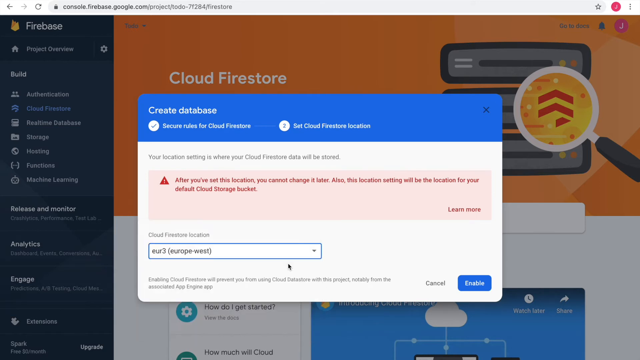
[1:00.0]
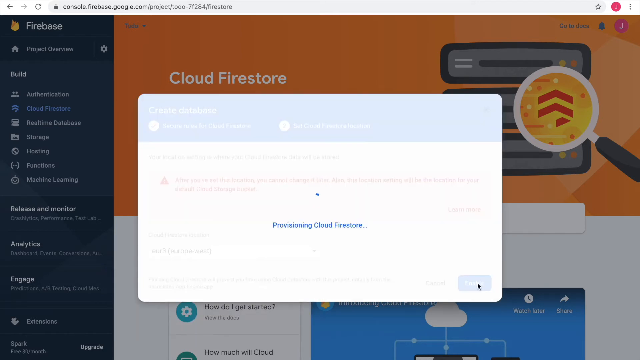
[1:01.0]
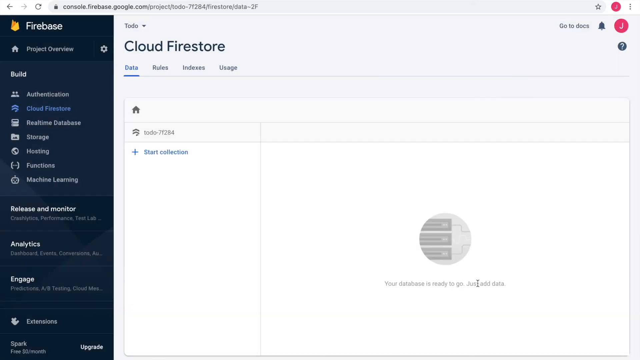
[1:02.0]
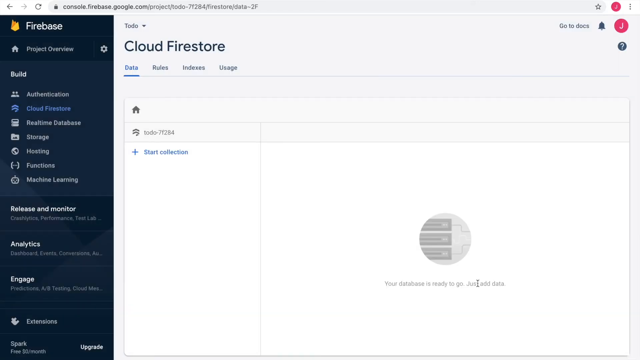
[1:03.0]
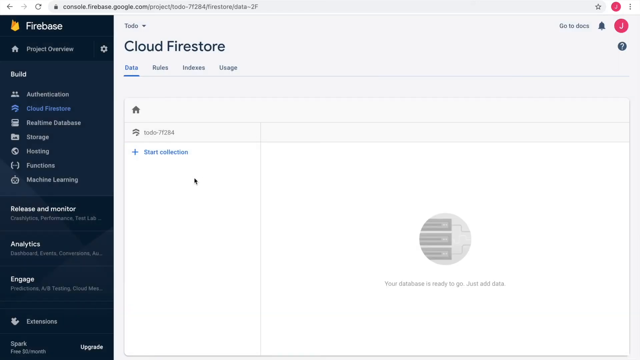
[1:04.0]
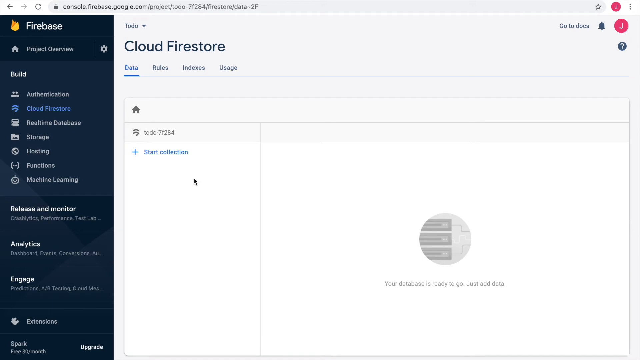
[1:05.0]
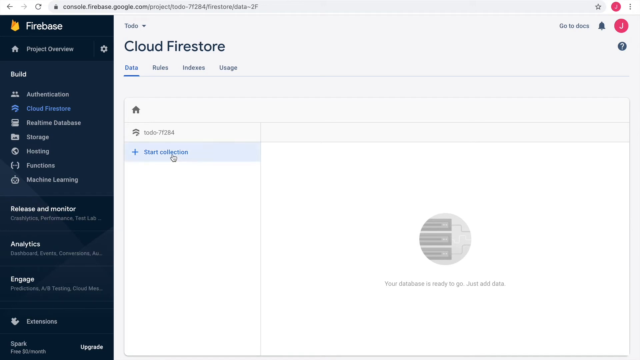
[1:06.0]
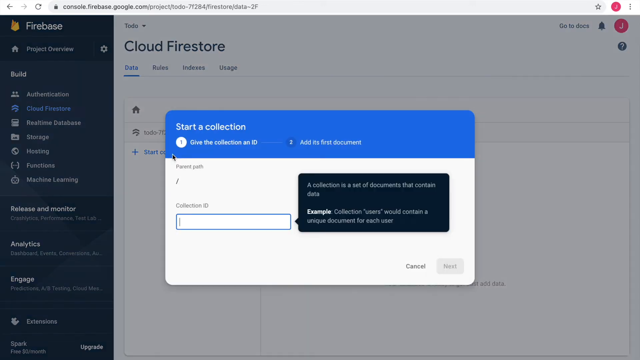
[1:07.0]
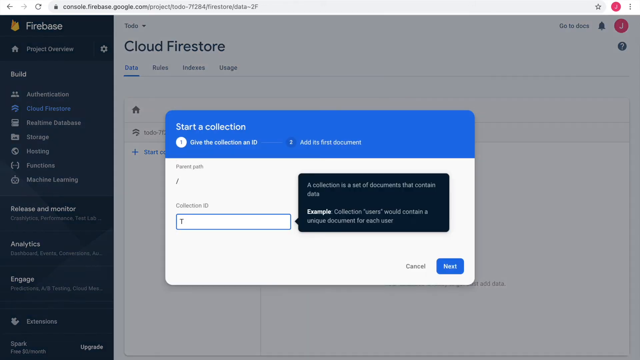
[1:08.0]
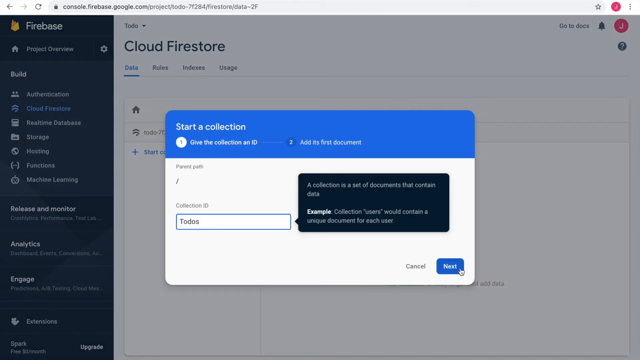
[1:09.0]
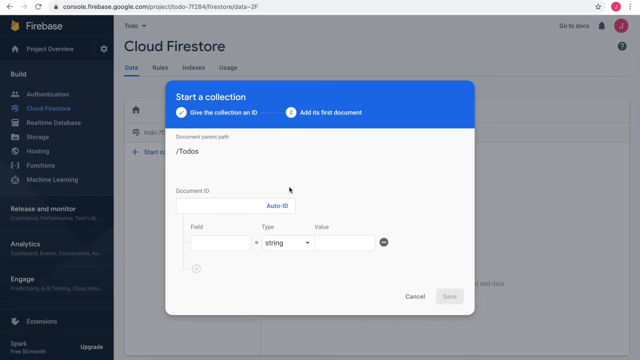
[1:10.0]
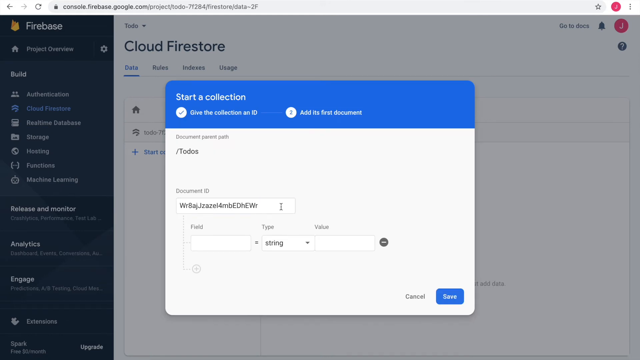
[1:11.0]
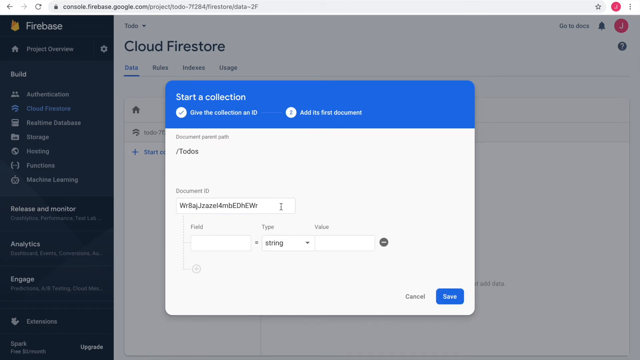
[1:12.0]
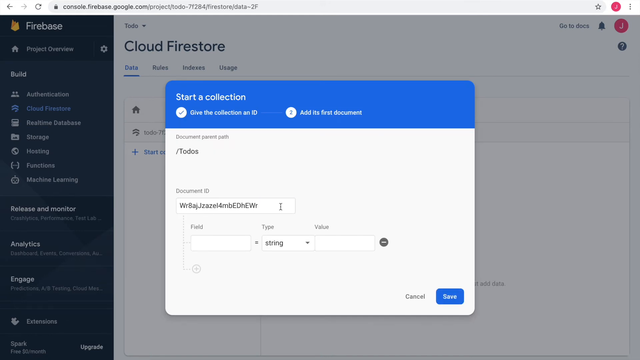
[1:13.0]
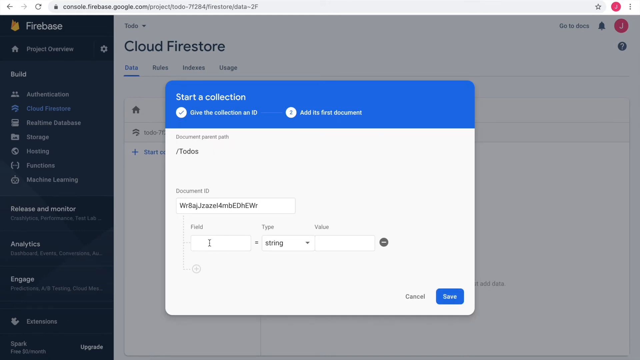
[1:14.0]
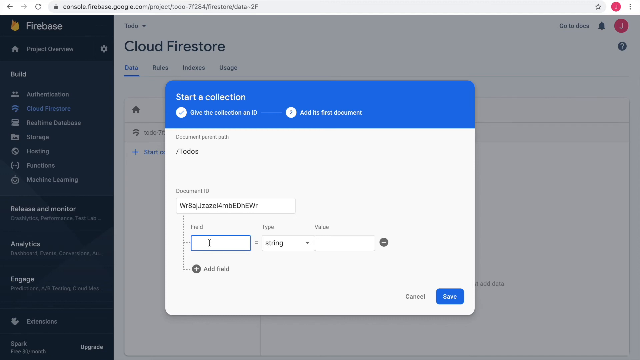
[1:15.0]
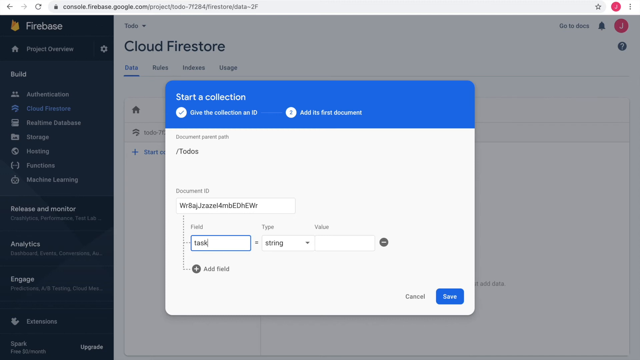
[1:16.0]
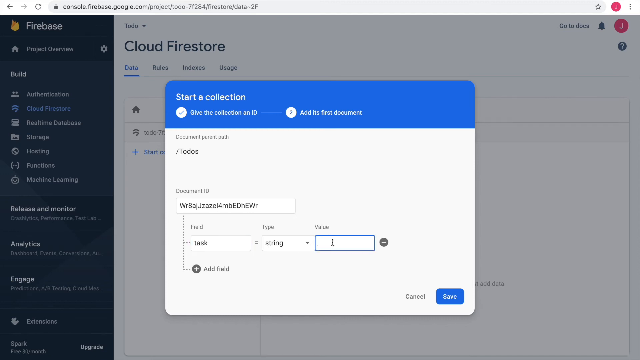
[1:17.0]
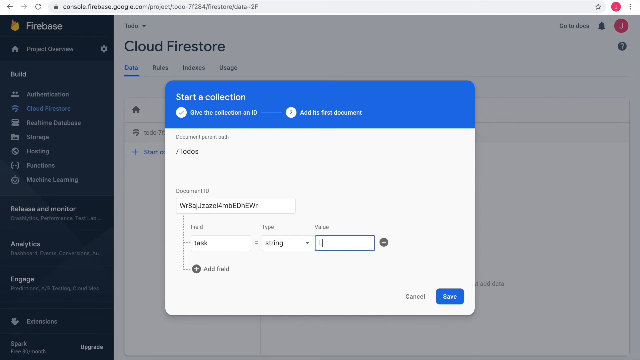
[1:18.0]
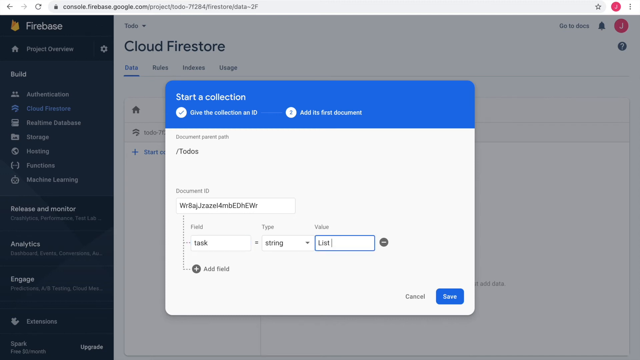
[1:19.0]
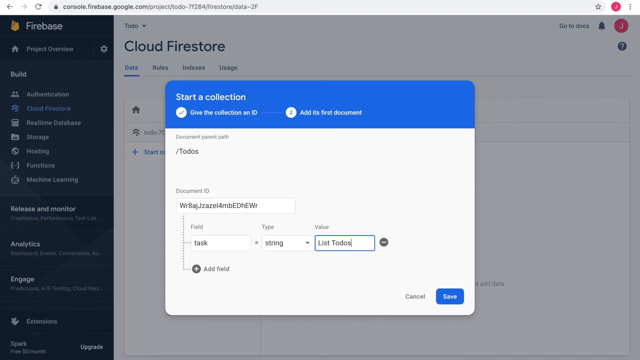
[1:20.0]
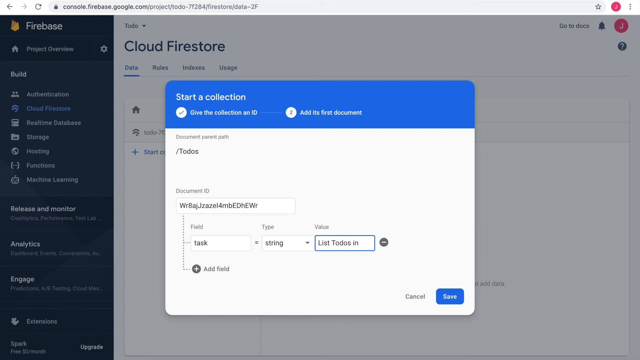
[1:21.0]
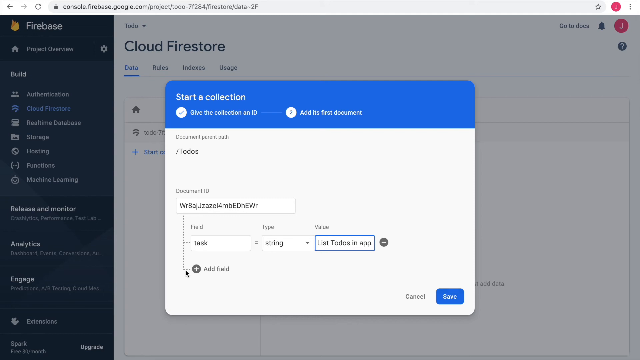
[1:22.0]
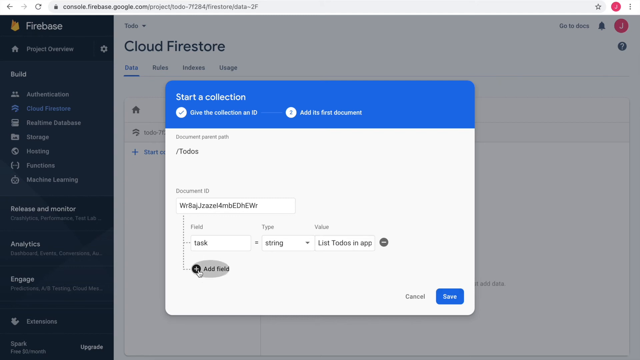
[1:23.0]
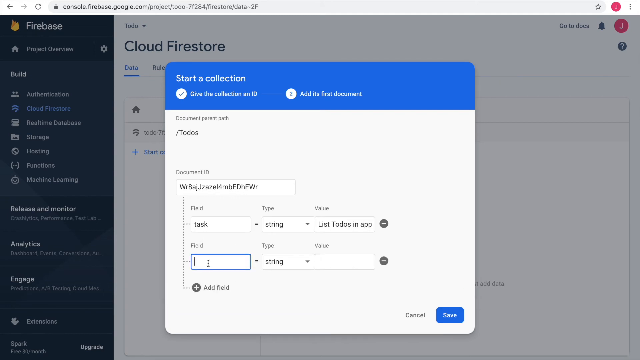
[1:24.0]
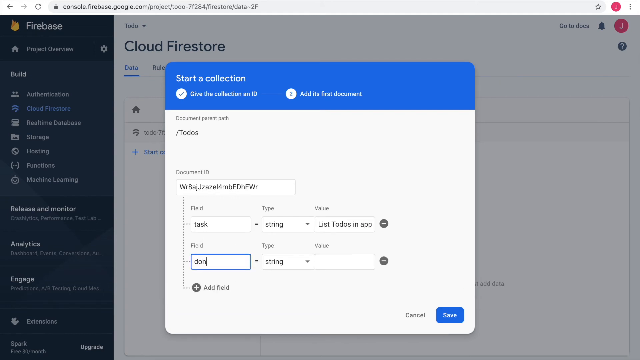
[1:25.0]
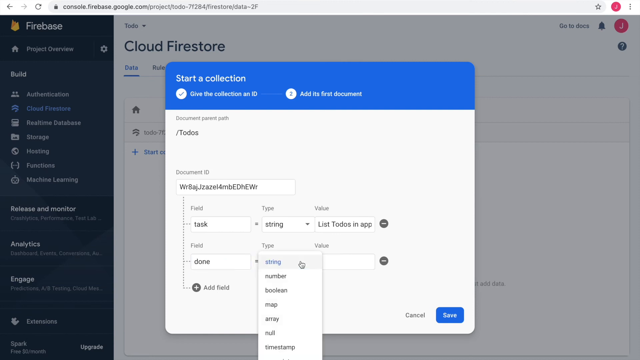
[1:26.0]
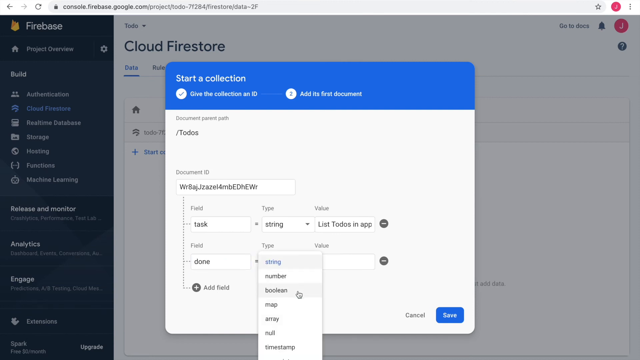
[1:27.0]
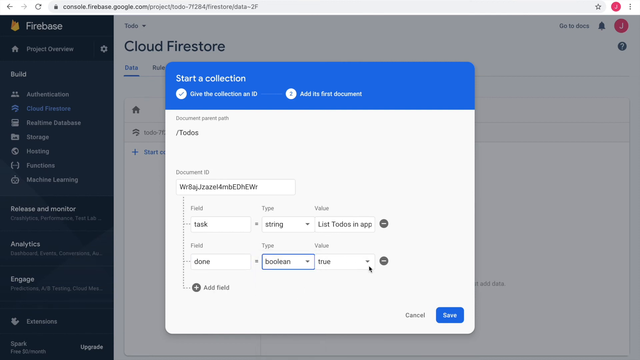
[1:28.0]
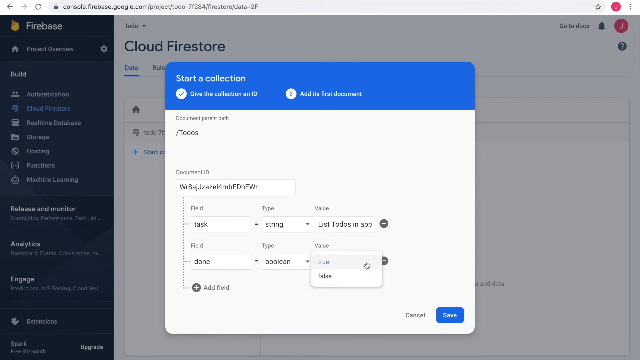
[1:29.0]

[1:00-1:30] The Cloud Firestore page is still shown, with Firebase in the corner and the website bar at the top. There are options to close the page, and analytics, release and monitor options in bold white lettering. A start collection dialog for Cloud Firestore is opened, with fields for a collection ID, a field and a value. Below are a drop-down list and save and cancel options. The view then returns to the page with Cloud Firestore and the web page in the background and the database front and center on the screen with a close tab.